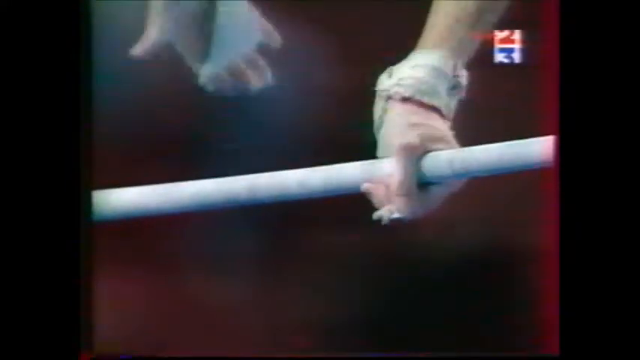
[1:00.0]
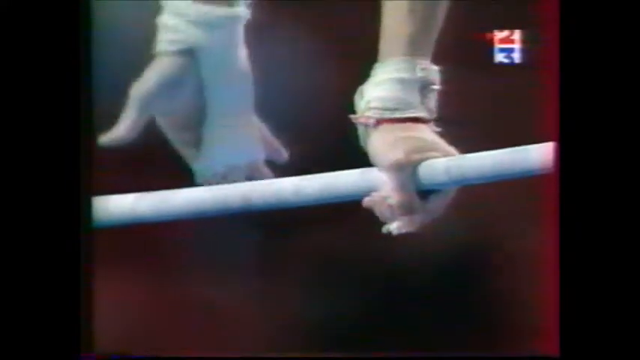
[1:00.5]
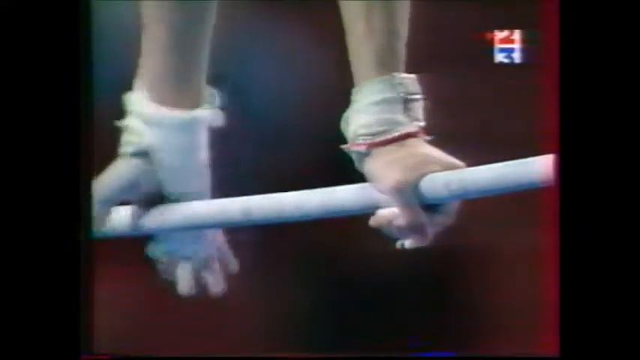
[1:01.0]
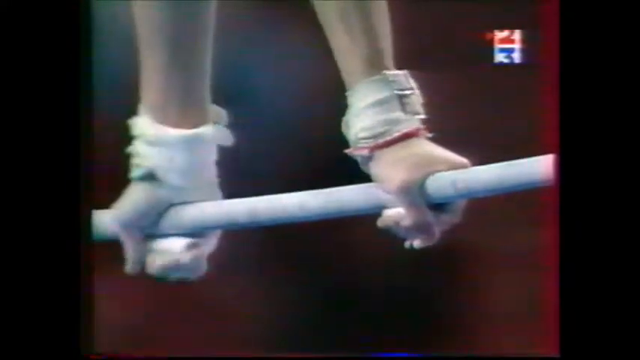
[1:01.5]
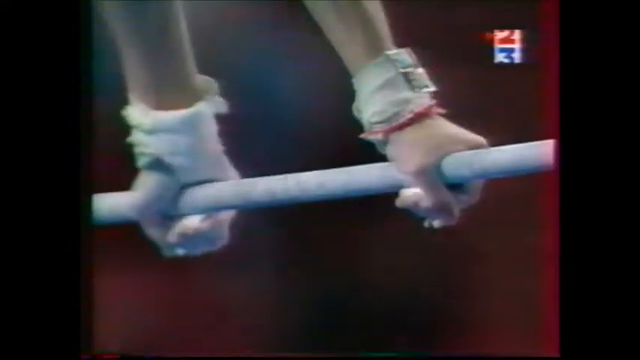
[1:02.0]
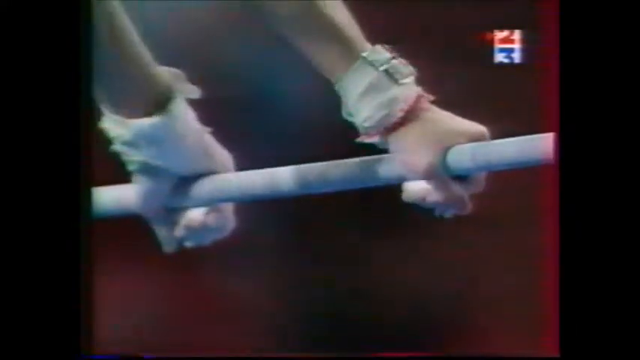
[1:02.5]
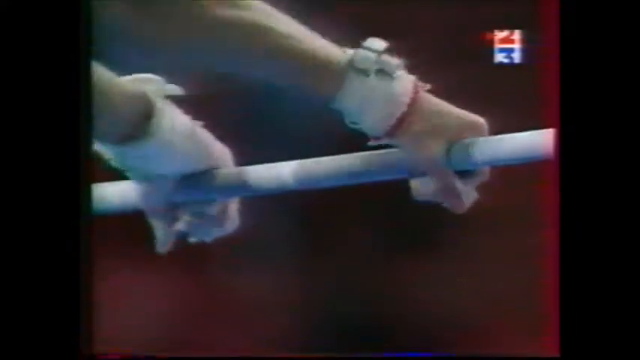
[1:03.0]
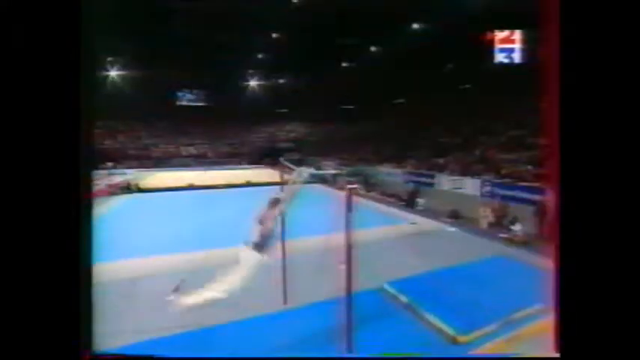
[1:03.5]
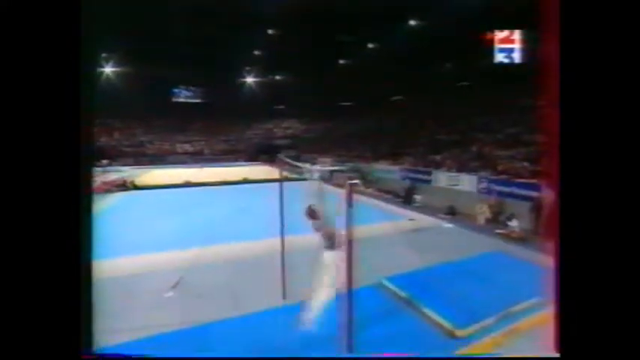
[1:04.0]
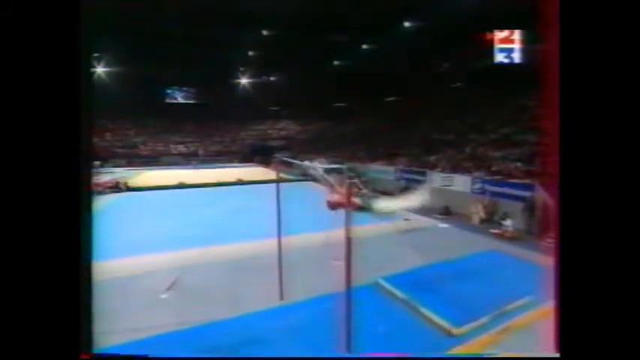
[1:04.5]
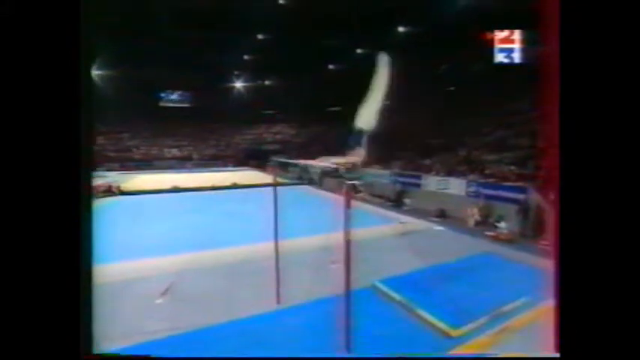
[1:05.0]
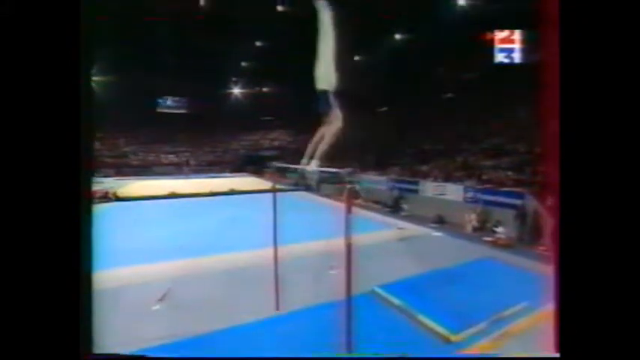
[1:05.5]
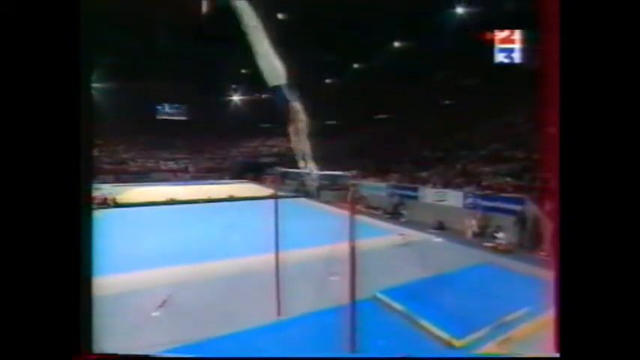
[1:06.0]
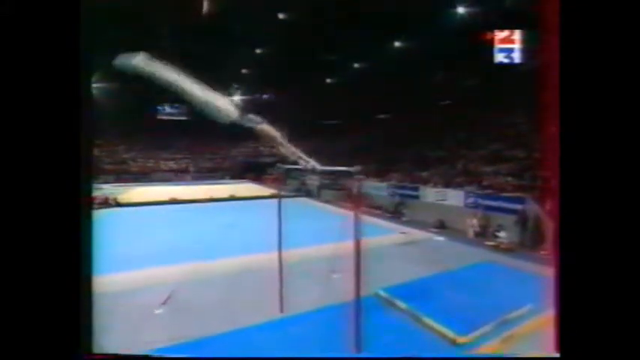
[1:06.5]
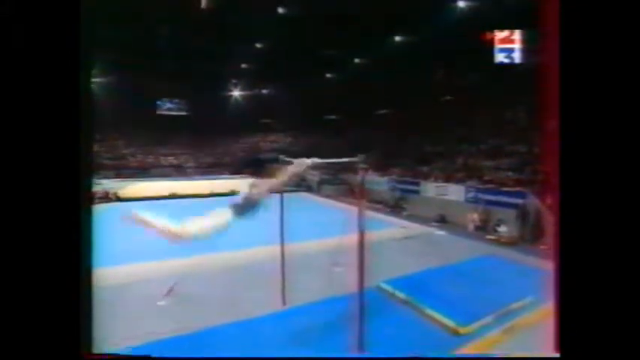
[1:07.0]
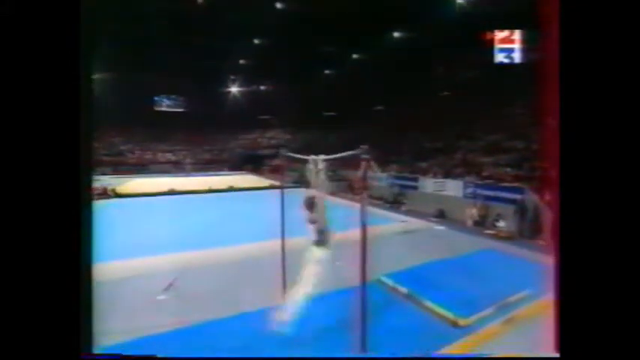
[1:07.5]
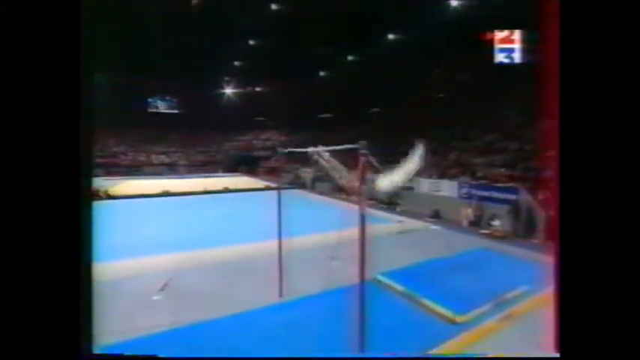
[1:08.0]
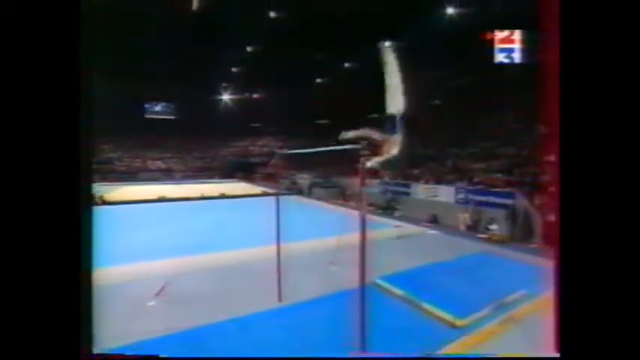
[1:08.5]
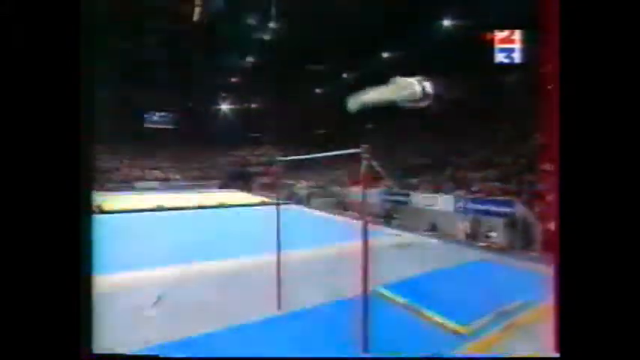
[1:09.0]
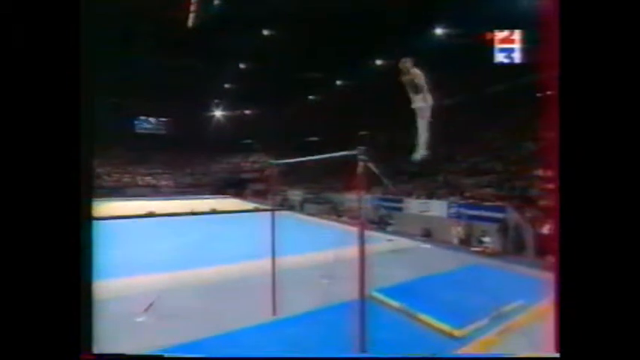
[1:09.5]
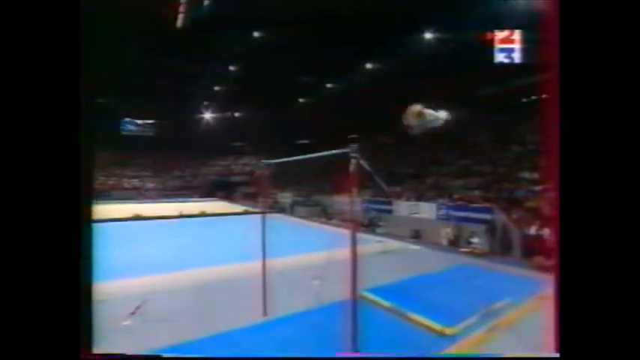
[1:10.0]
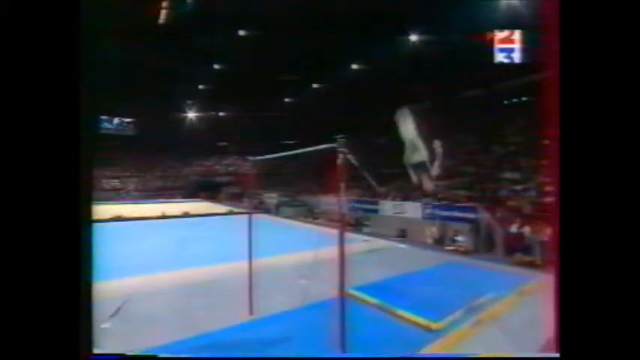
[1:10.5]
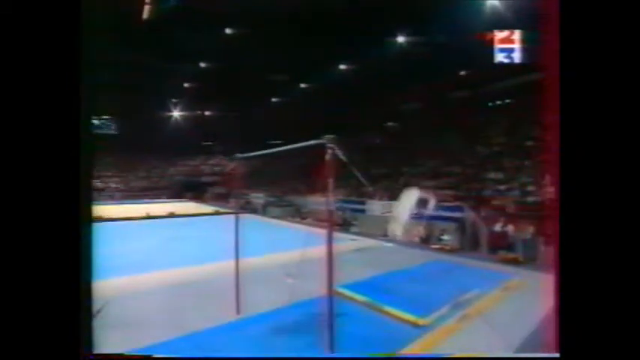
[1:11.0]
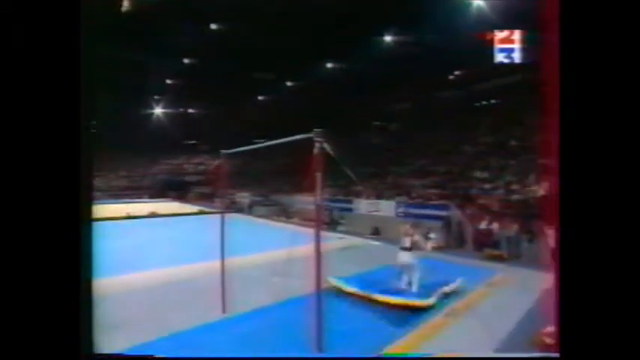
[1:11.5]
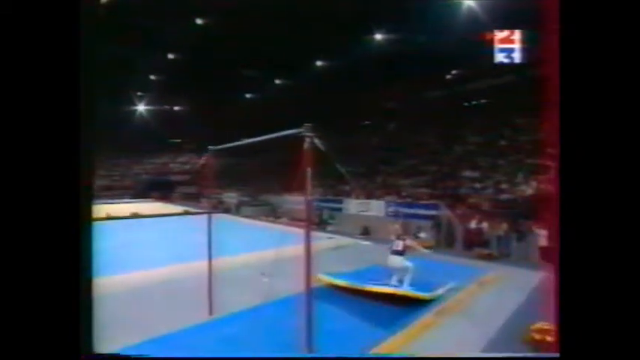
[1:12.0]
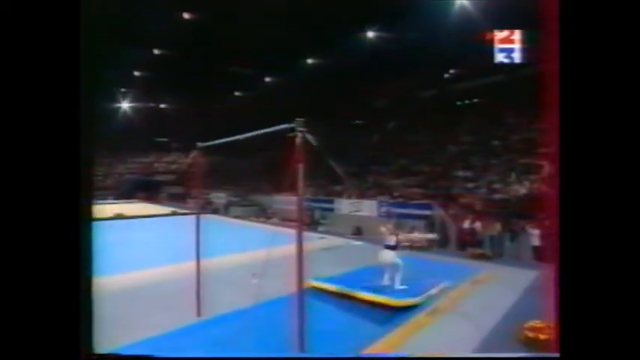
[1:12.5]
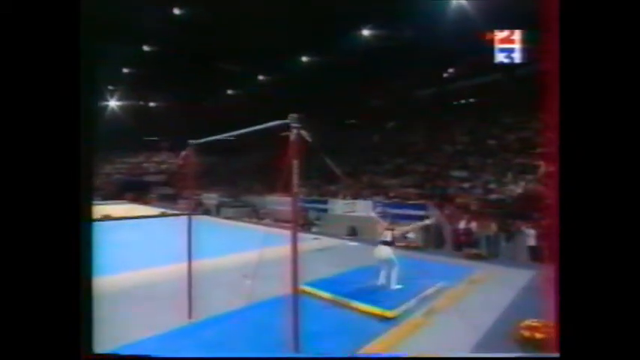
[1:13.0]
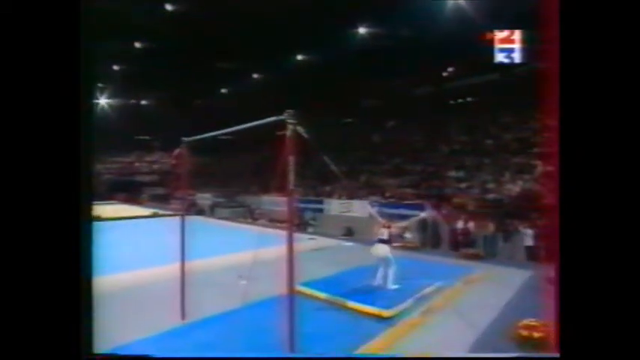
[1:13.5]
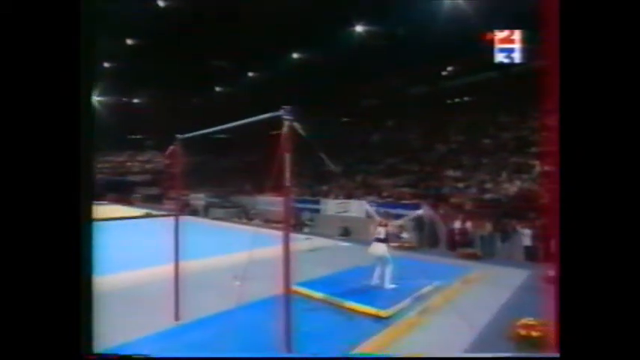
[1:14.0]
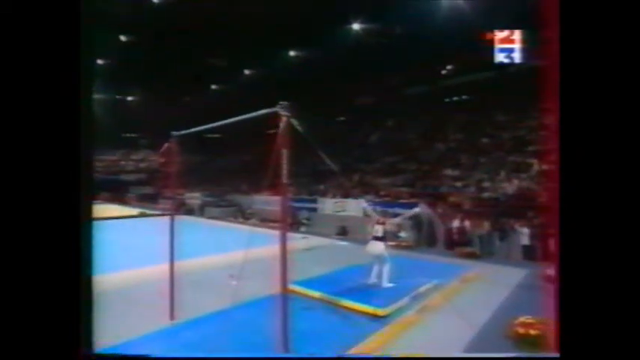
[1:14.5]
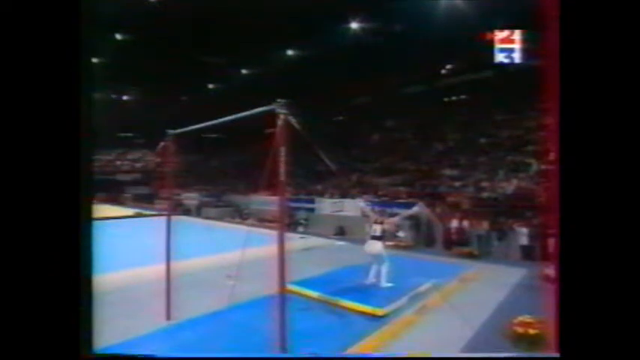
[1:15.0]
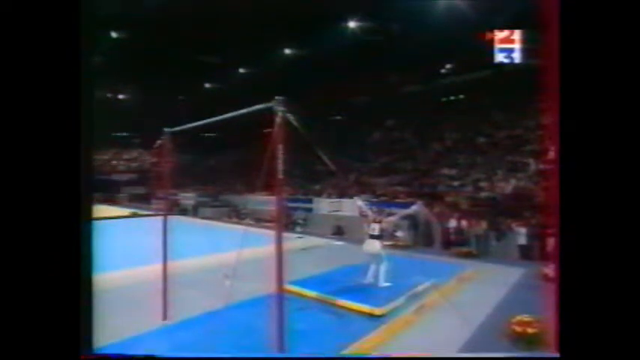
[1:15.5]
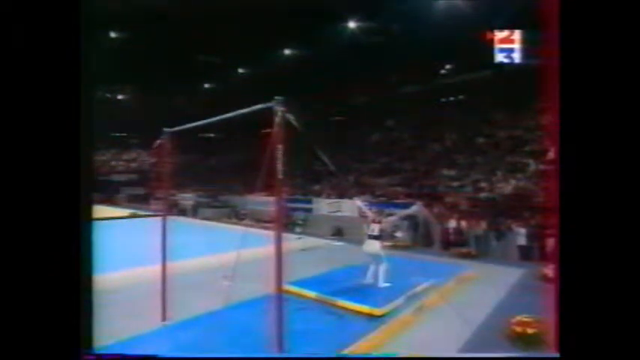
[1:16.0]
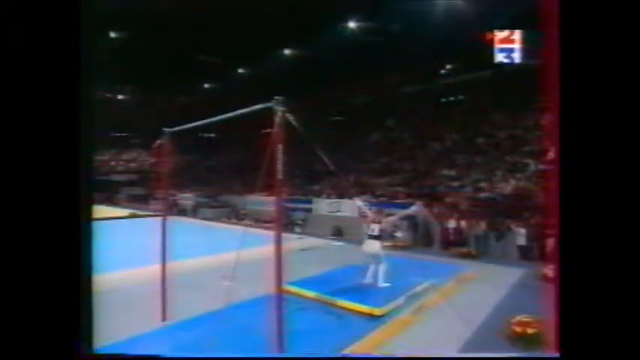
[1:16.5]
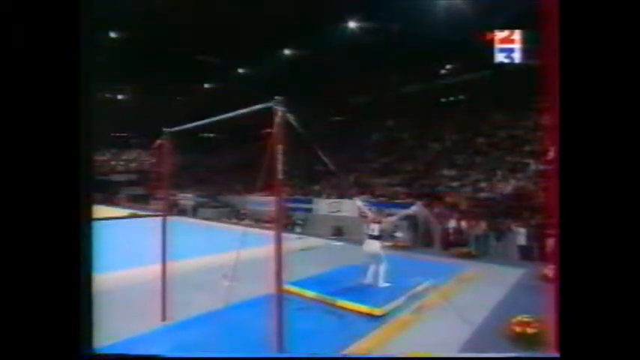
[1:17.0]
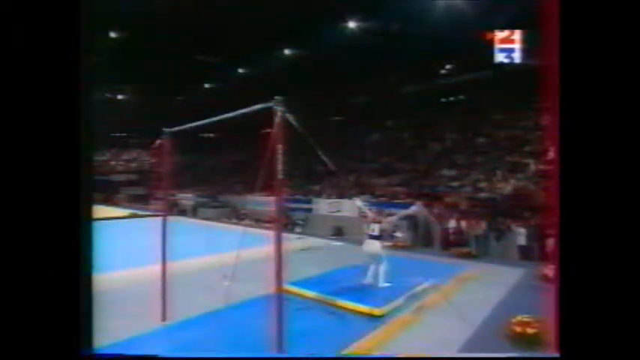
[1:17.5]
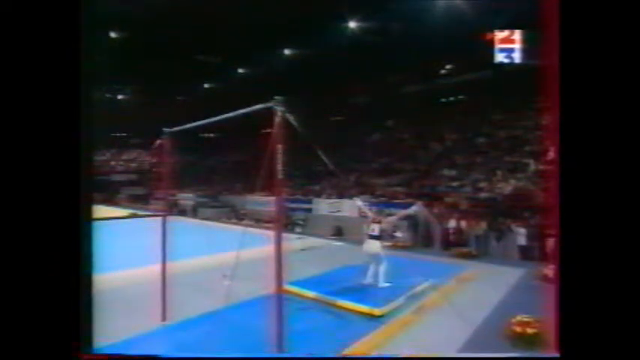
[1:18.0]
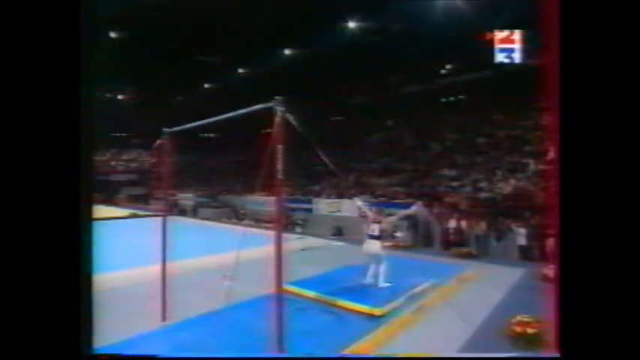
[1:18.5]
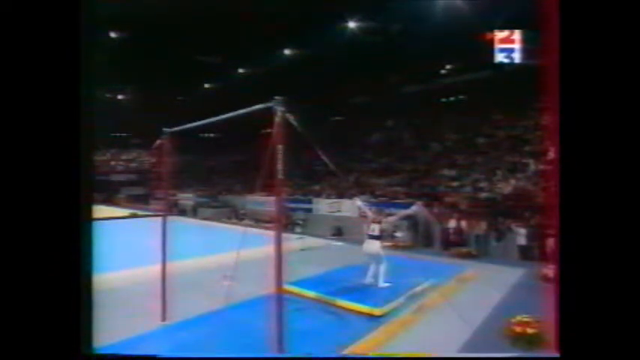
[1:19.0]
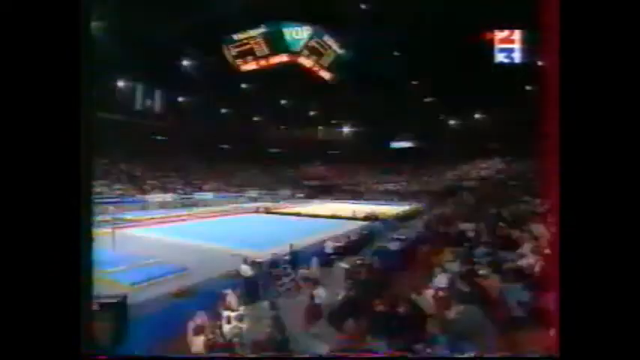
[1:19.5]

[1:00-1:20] A slow-motion replay shows the French male athlete's performance on the bar from the side as he swings around. The stands are full of people, though the image is a bit blurry, and the footage seems very old. Lights are visible at the top of the stadium. Swinging forward, he lets go of the bar, goes up, spins once and lands perfectly on a mat that is above a bigger mat, raising his hands to keep his balance and to celebrate the landing. The angle changes to show the entire gym floor, without anyone on it. The top mat he landed on is sort of lifted slightly at the back; it is blue with yellow underneath, and the larger mat is likewise blue with some yellow visible underneath. In the distance there is another blue rectangle on the floor, another performing area, and a sort of beige area beyond that. The bar is white at the top, its two supporting poles are red, and wires come down to hold it in place. In the top right of the screen, the numbers two and three appear in a white square.